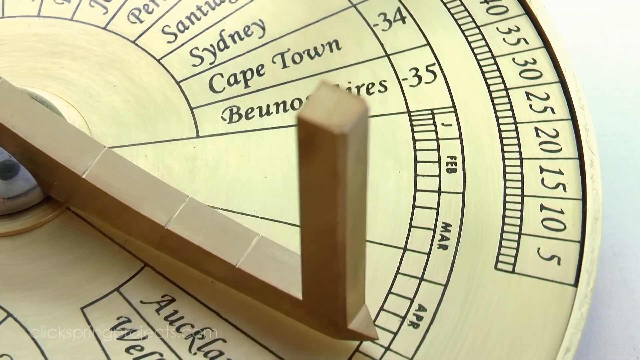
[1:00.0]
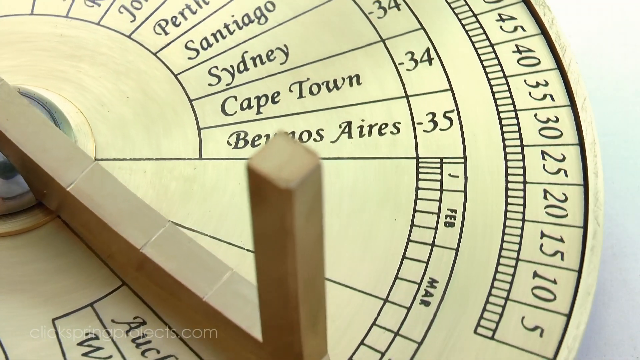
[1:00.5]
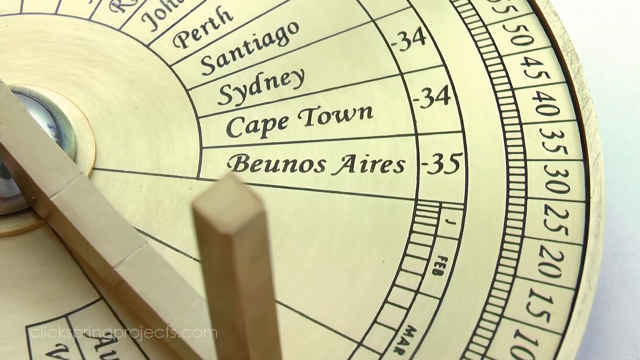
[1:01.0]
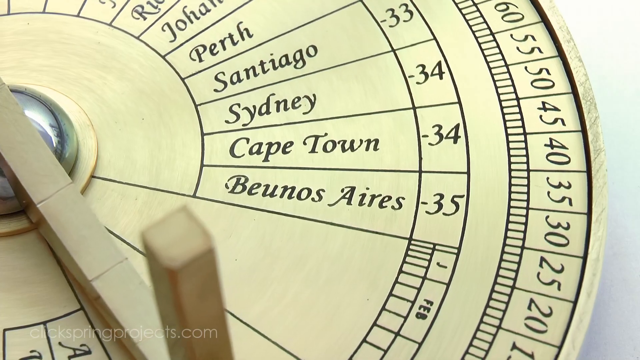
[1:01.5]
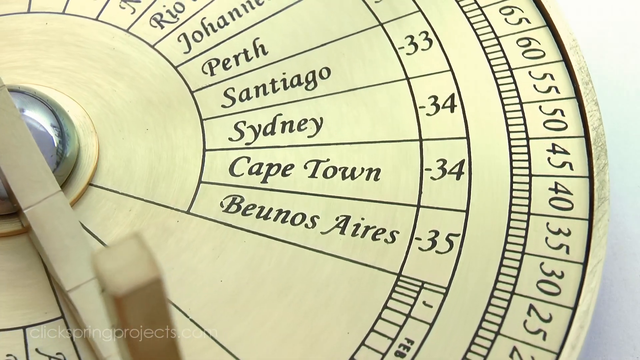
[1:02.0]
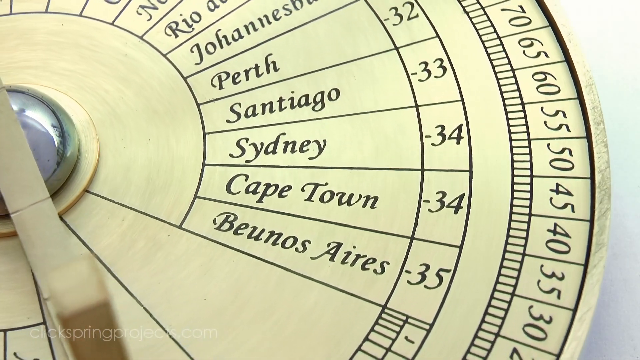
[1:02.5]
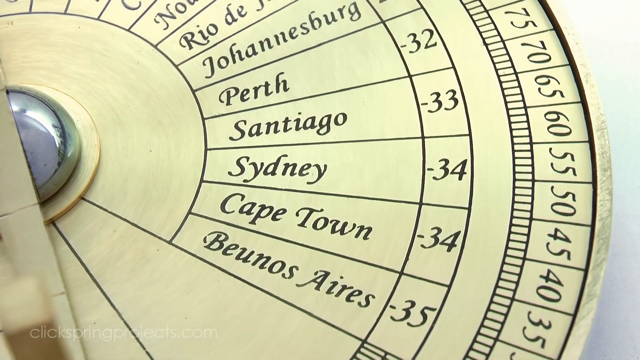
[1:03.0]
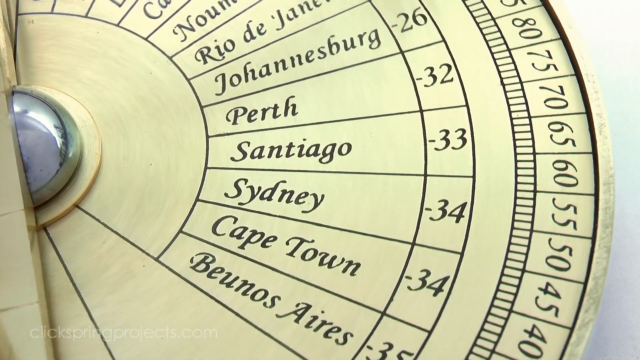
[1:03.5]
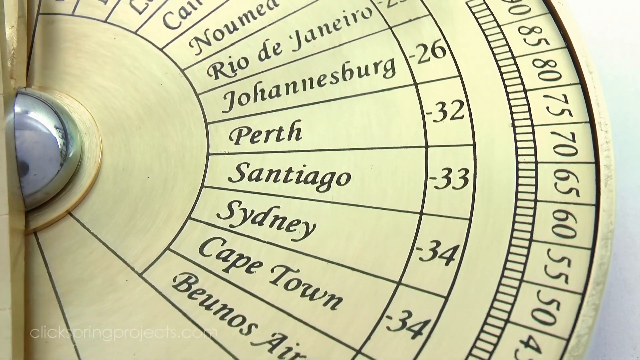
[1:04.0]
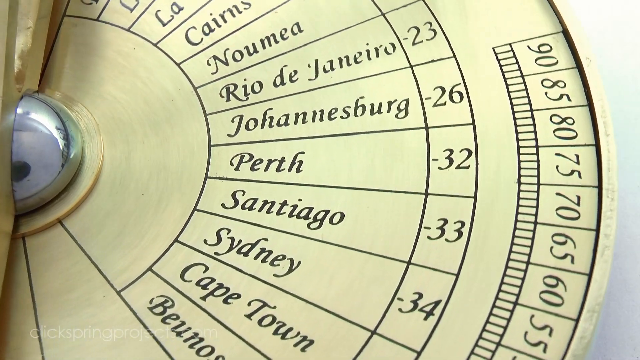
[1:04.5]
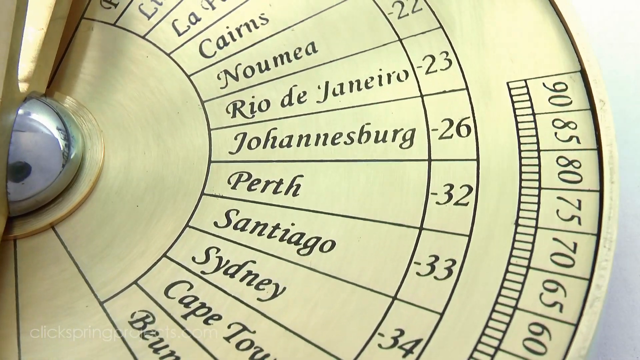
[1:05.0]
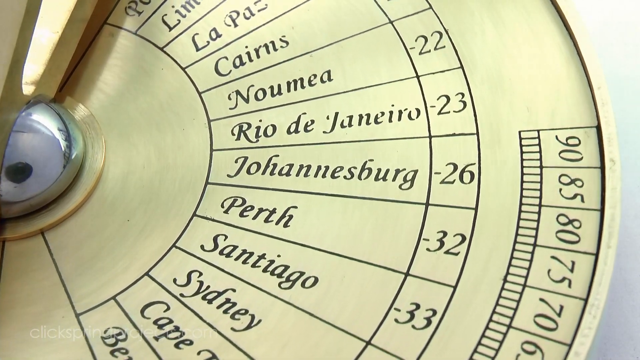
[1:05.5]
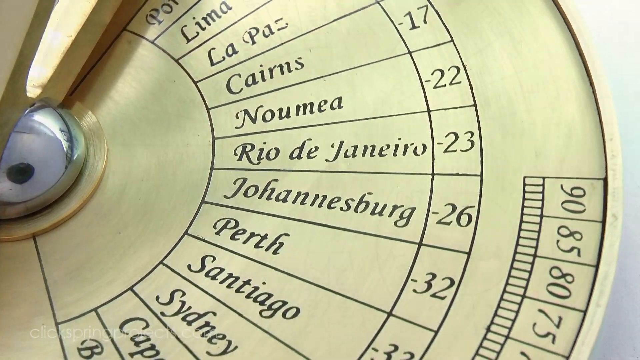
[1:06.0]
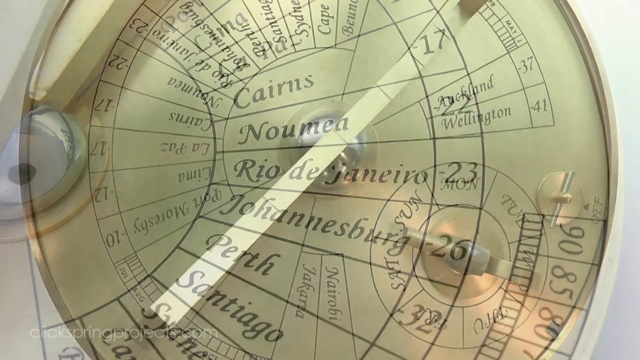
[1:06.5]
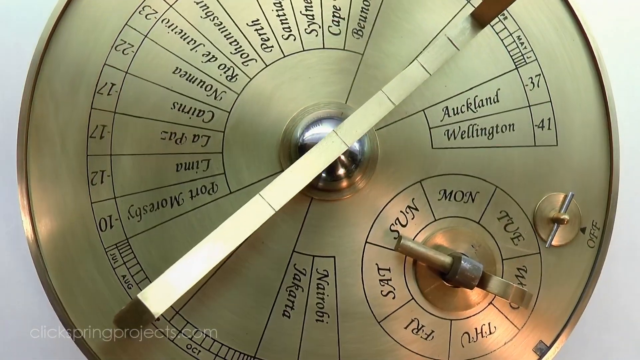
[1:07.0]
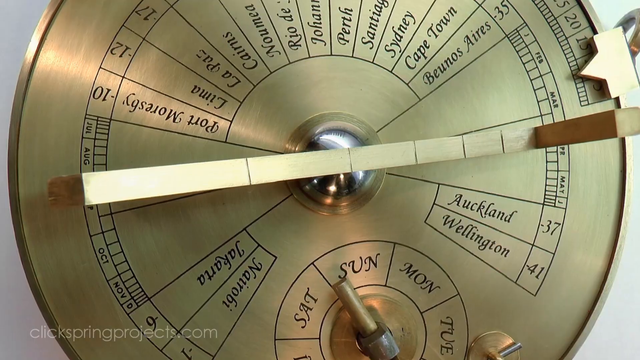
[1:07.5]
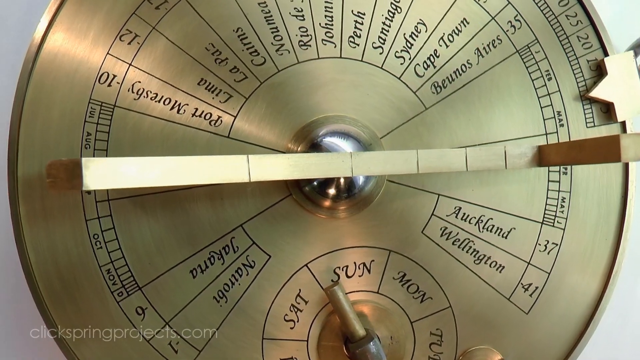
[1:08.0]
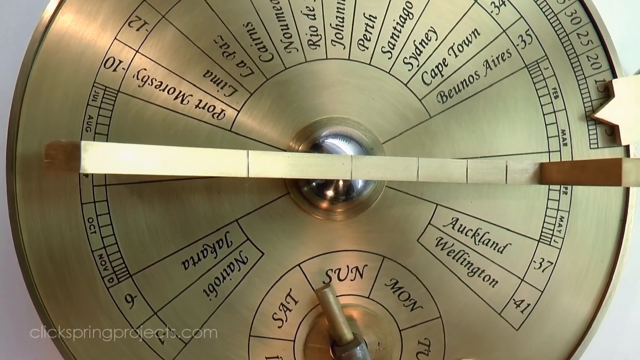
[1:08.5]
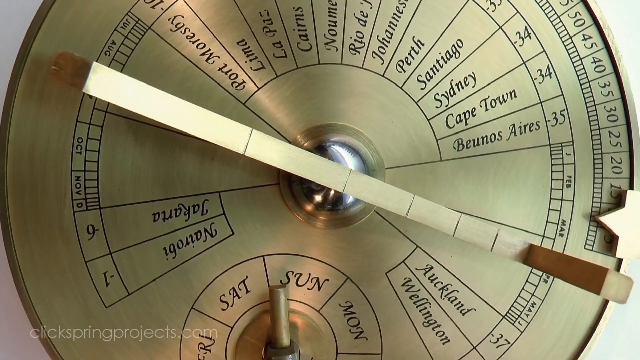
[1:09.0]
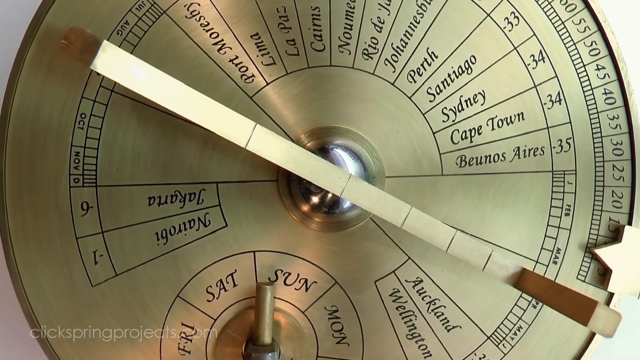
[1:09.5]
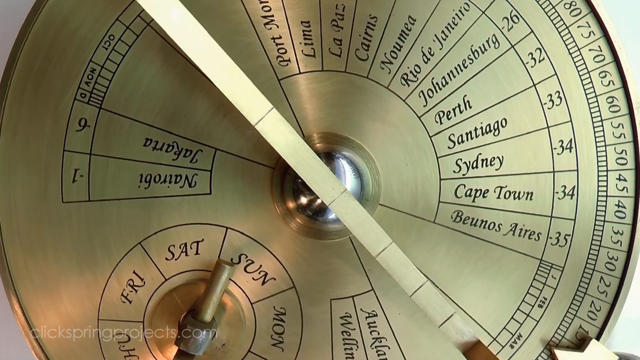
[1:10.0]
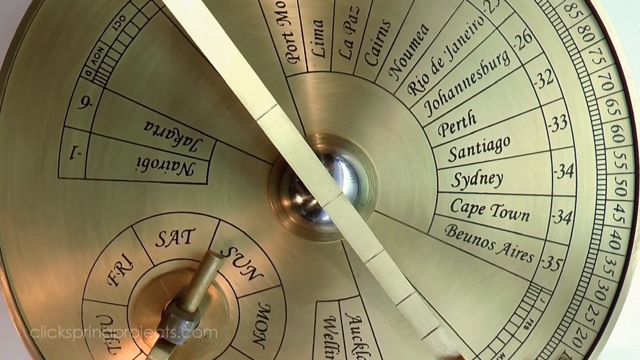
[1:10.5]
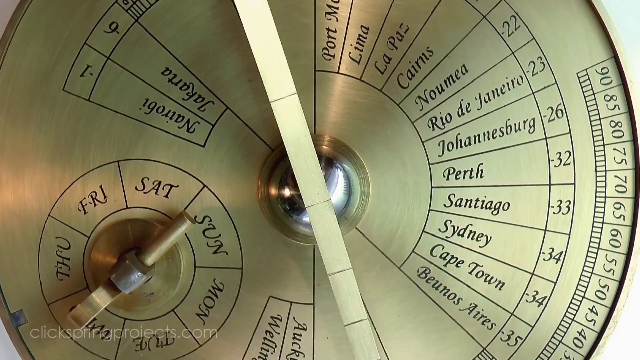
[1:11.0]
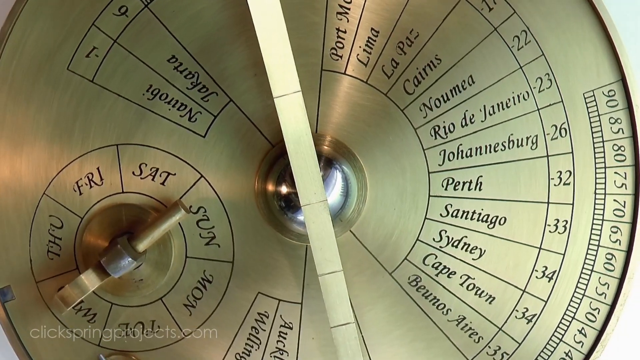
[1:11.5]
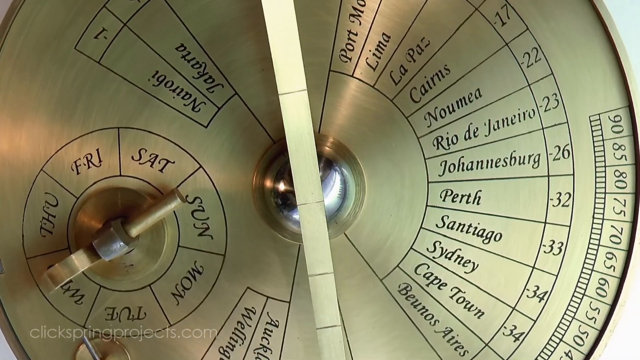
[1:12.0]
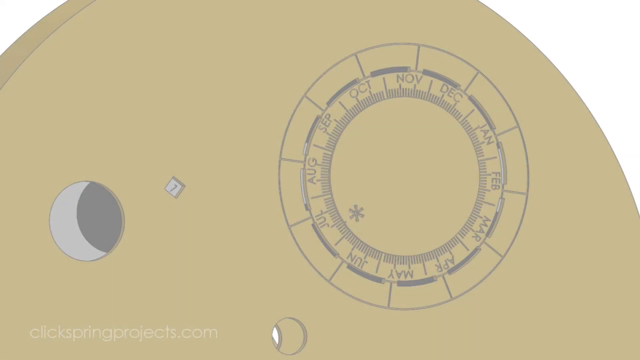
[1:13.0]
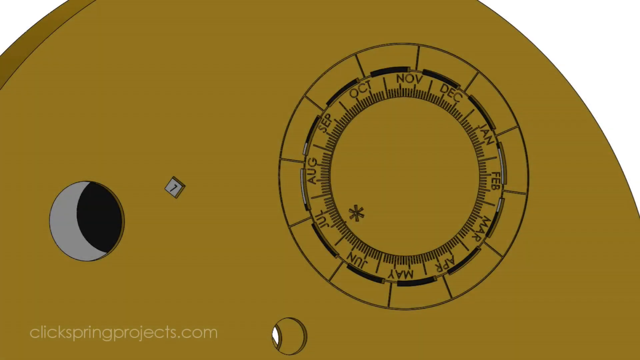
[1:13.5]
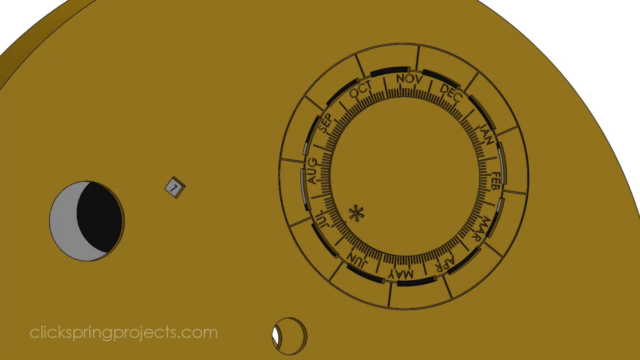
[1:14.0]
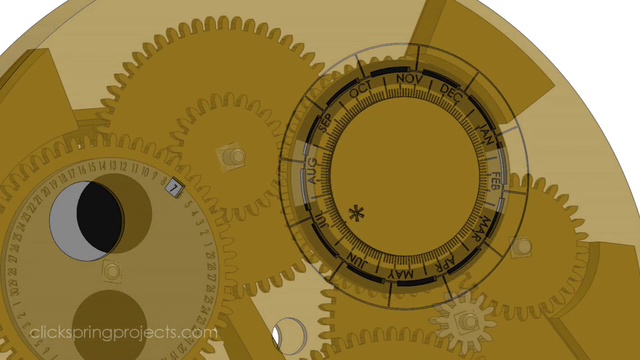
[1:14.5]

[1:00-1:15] Part of the gold Byzantine sundial calendar shows different locations such as Buenos Aires, Cape Town, Sydney, Santiago, Perth and Johannesburg, with numbers such as 35, 34, 34, 33, 32 next to them. On the very outside of the circle or disc is a set of numbers going by fives from the top down: 70, 65, 60, 55, 50, 45, 40, 35, apparently starting at 90. Different views of the back follow, showing the locations, the numbers, and the days of the week from Sunday to Saturday.